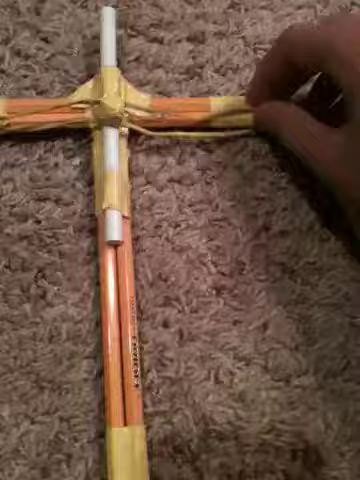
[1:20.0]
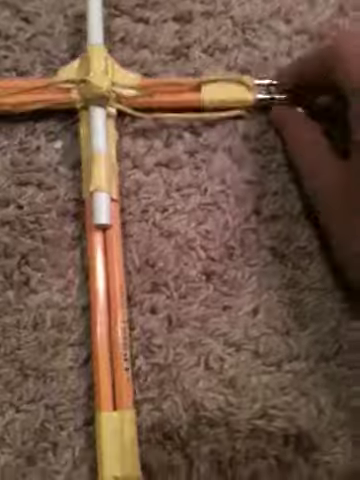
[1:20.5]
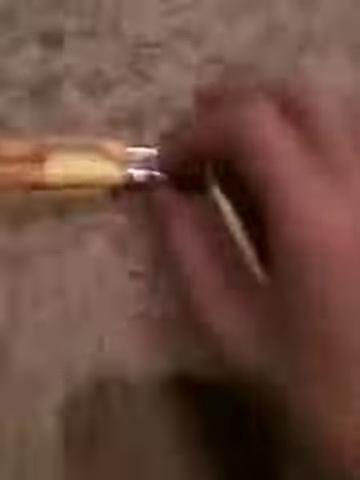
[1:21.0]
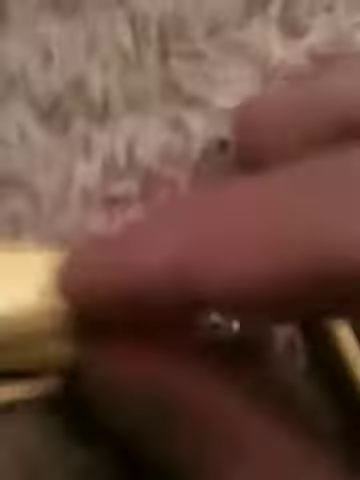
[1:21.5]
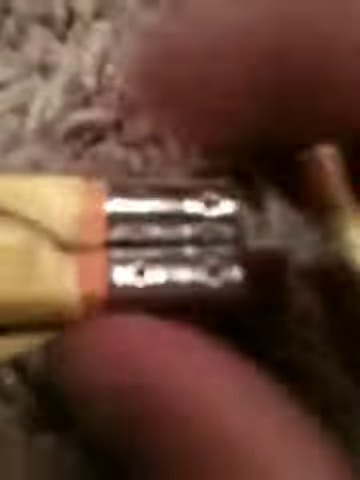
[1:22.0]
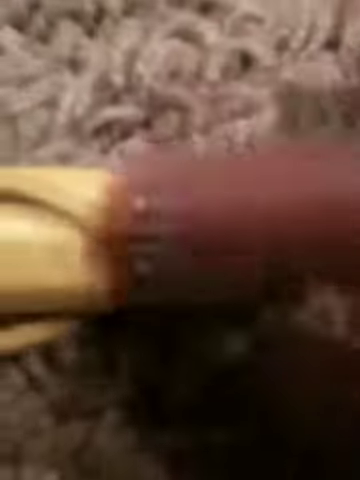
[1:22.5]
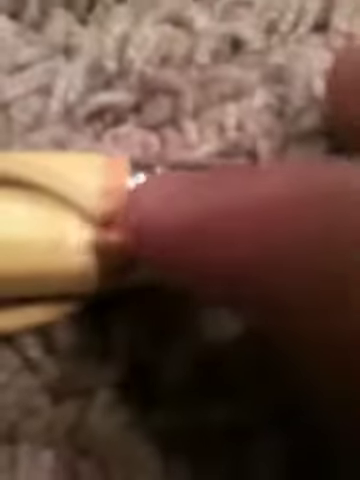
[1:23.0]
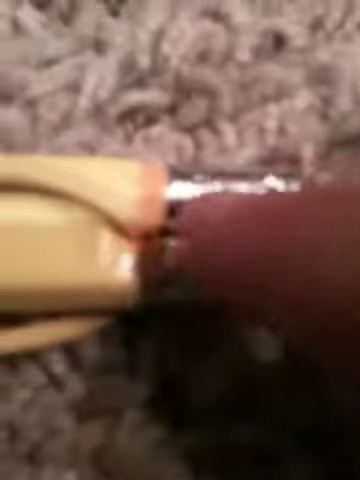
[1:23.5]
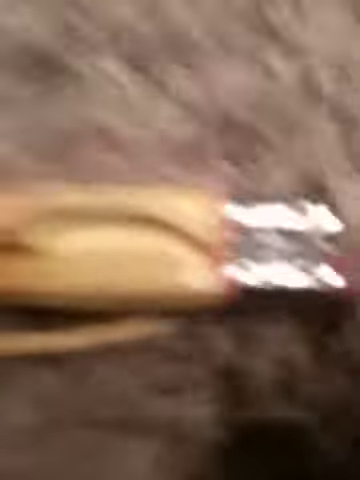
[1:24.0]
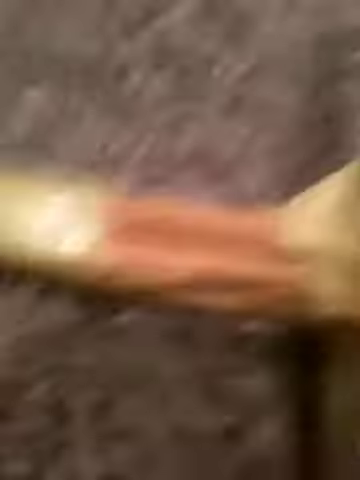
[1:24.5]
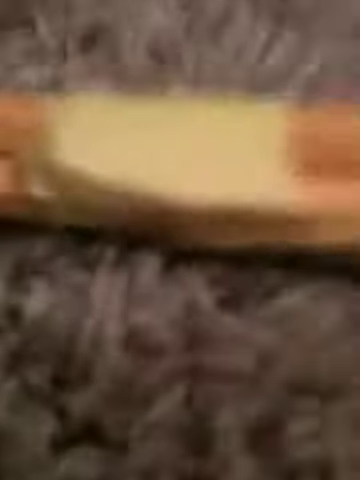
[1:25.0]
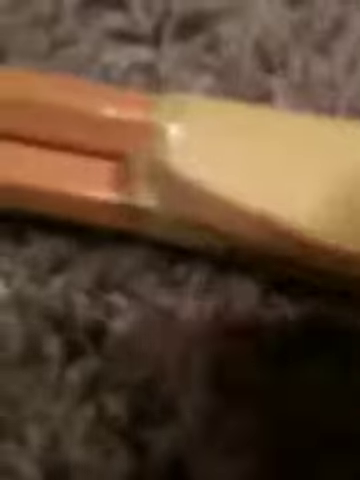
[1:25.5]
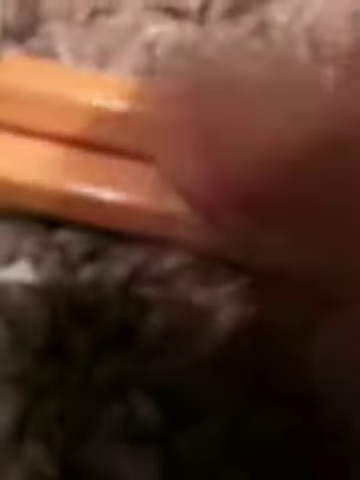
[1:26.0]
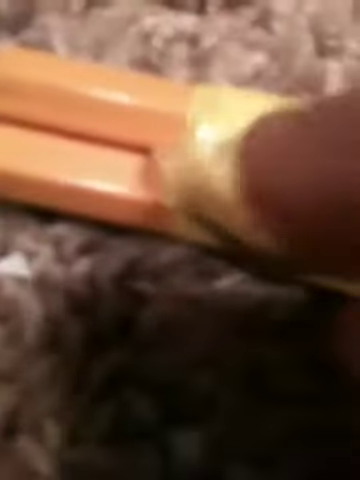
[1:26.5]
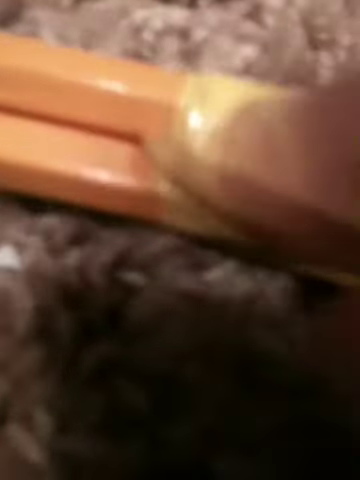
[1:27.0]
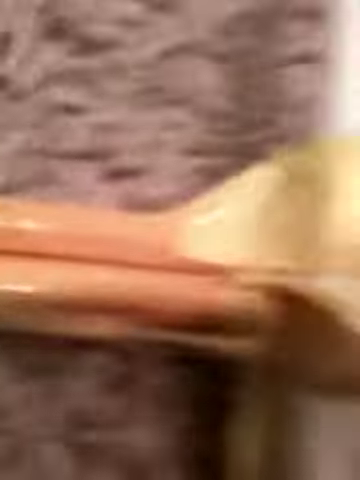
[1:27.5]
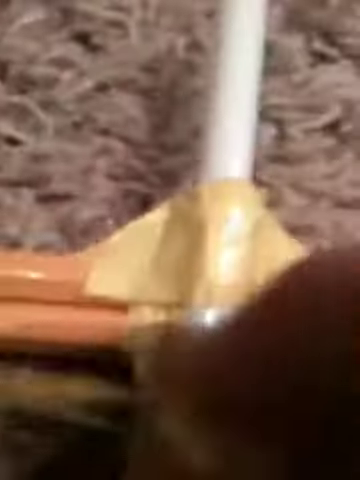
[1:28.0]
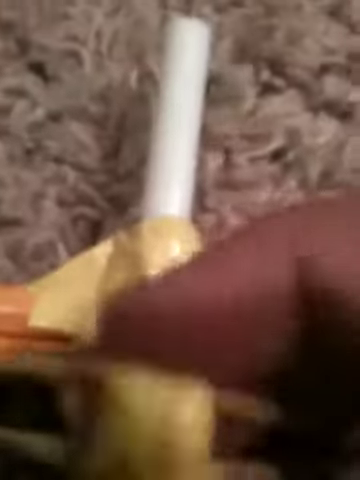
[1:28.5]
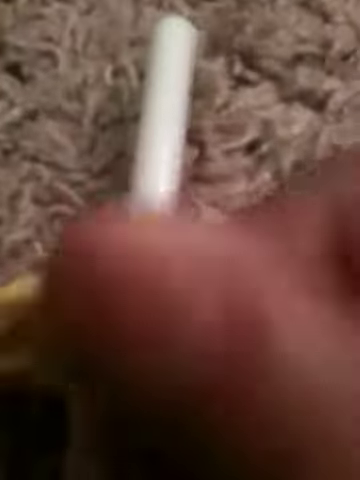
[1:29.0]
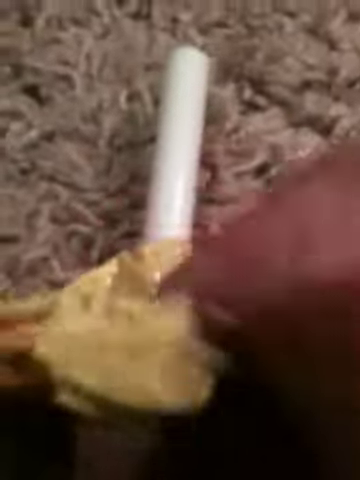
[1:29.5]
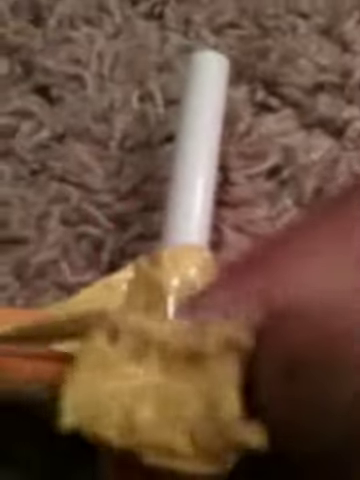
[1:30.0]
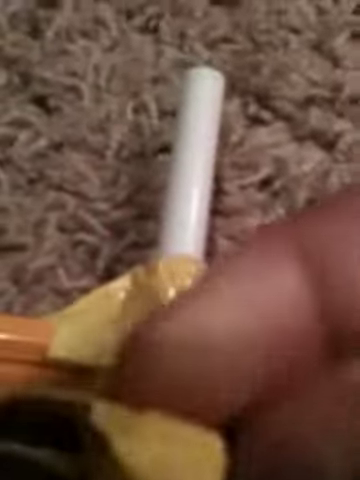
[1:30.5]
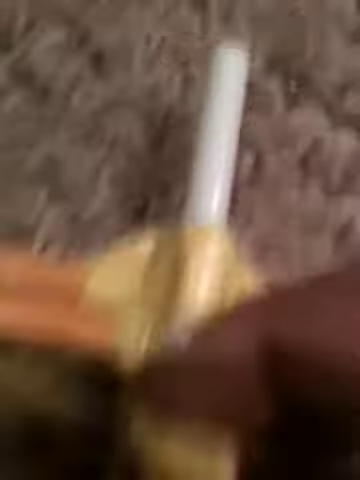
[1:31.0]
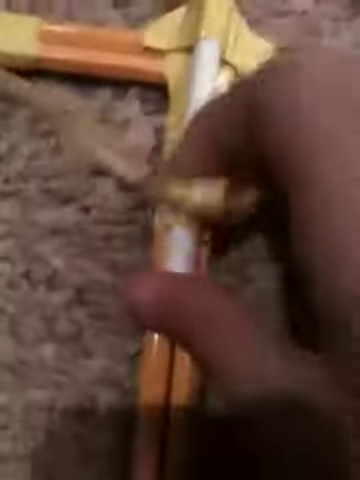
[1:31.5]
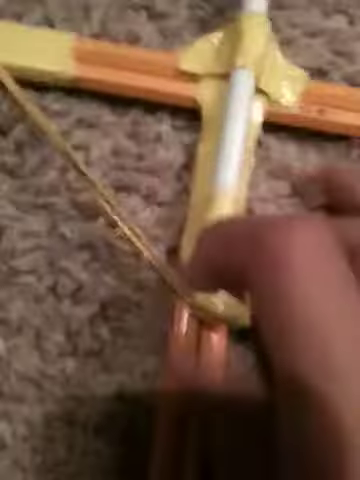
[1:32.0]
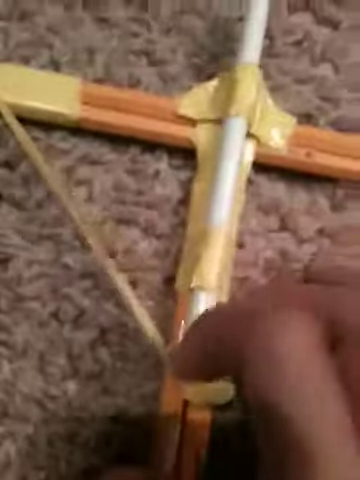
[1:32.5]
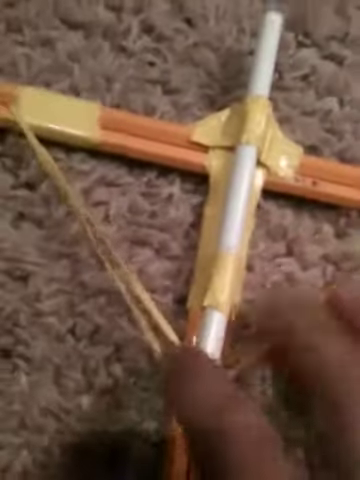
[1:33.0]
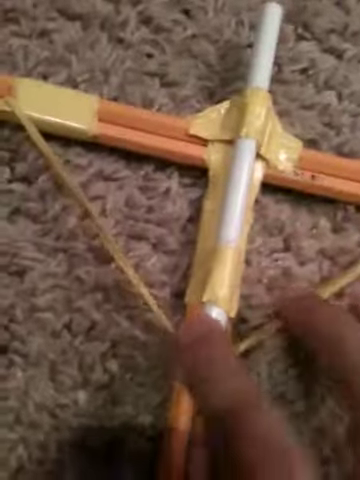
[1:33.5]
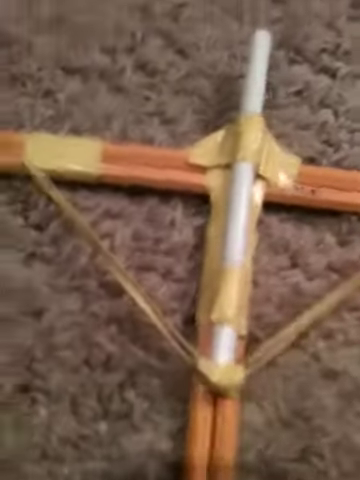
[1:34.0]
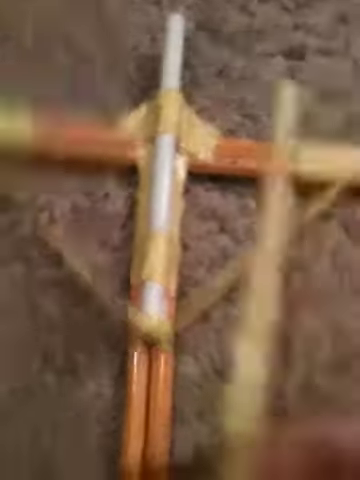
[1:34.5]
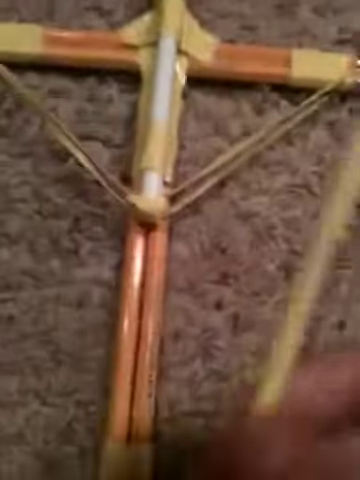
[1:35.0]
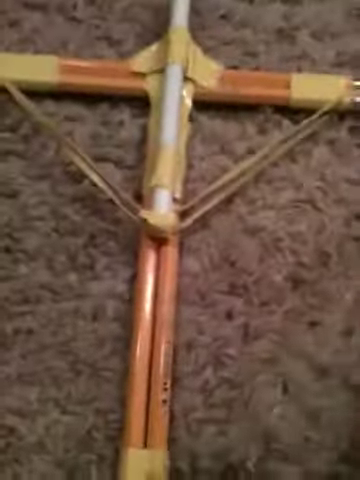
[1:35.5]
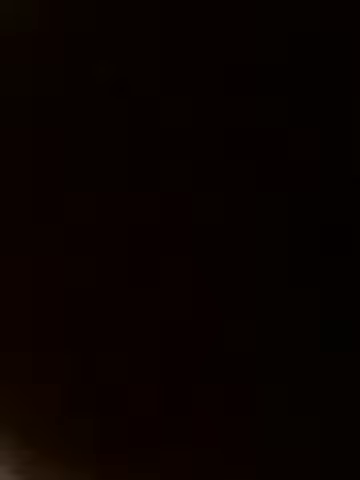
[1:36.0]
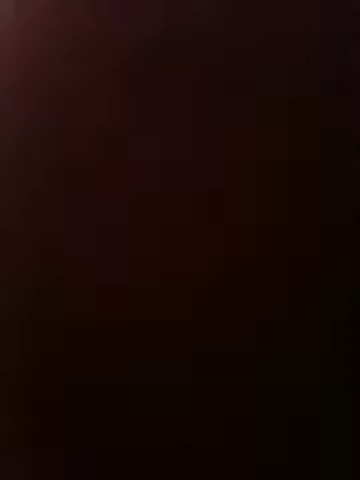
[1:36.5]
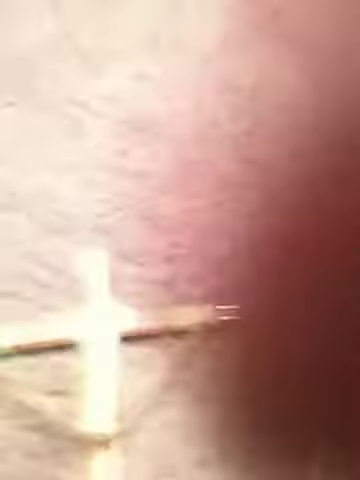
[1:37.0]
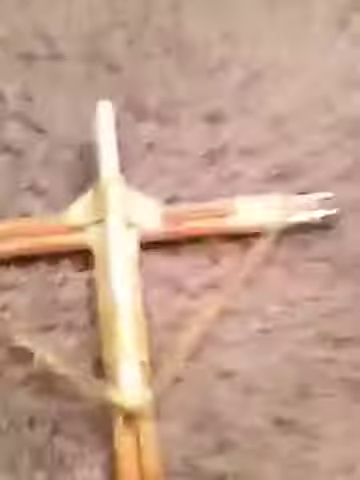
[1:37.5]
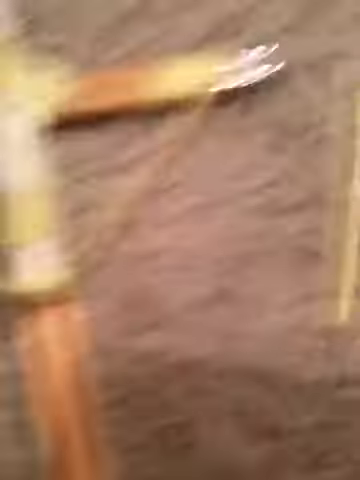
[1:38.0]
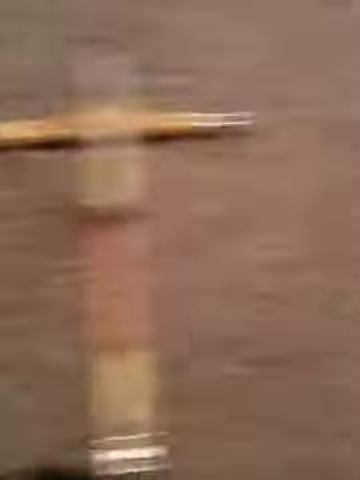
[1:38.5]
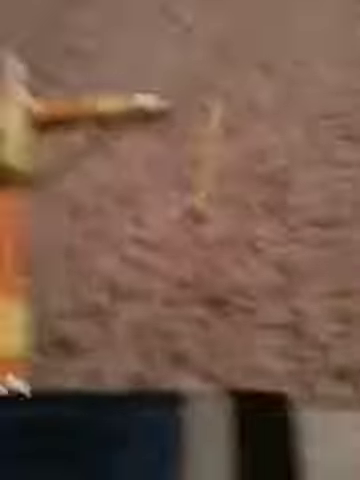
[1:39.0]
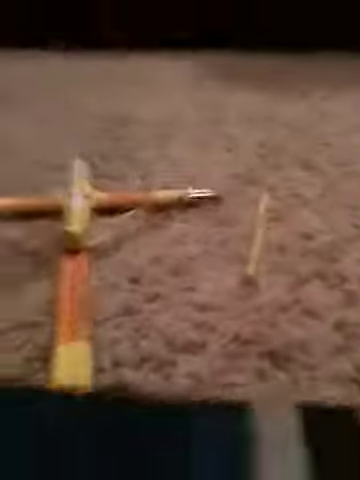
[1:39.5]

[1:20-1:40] The crossbow made of pencils is on a light brown carpeted surface. A Caucasian right hand shows close-up details of the right-hand side of the crossbow bolt, showing the metal portion that holds the eraser onto the pencil, and points to the elastic attached with yellow tape on the right-hand side and then on the left-hand side of the crossbow. The close-up view shows the center of the elastic band aligned with the main shaft of the crossbow. The user then pulls the elastic straight back to the loading port. The shaky camera backs off, showing a larger view of the entire contraption on the carpeted surface, with what appears to be a dark black background.